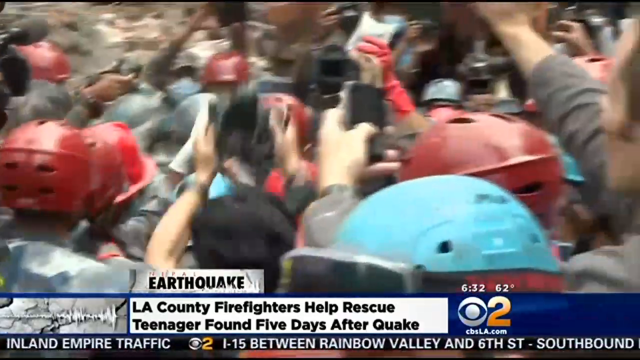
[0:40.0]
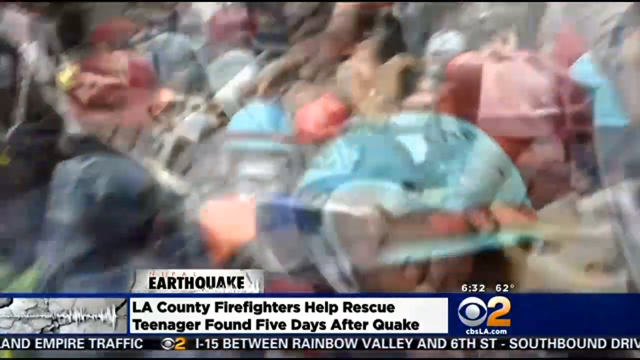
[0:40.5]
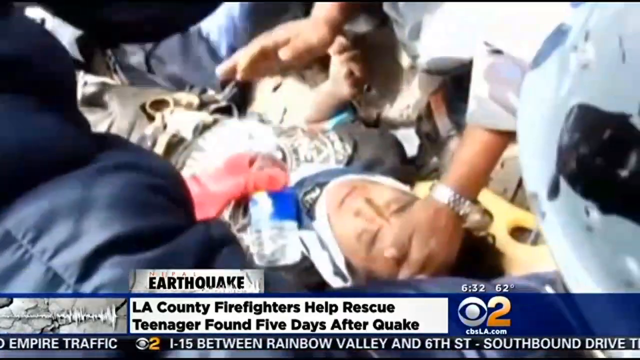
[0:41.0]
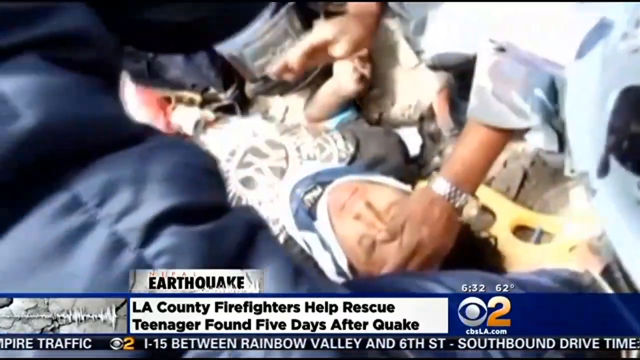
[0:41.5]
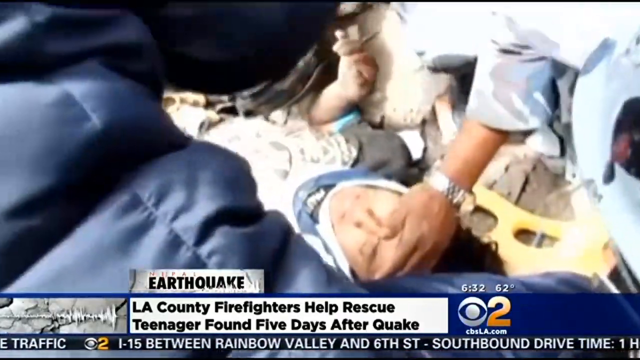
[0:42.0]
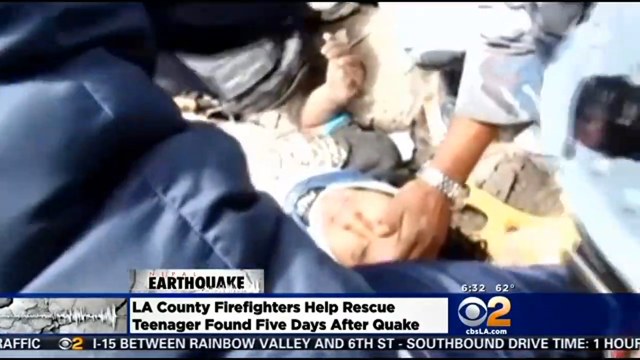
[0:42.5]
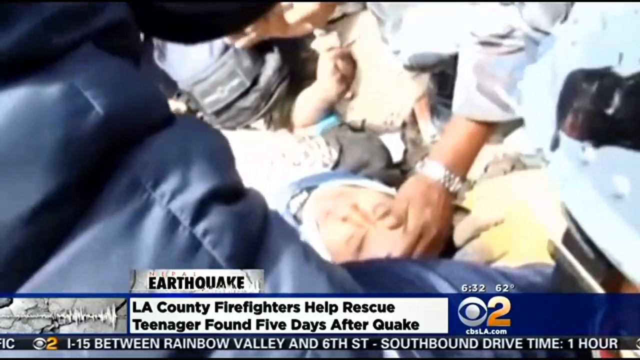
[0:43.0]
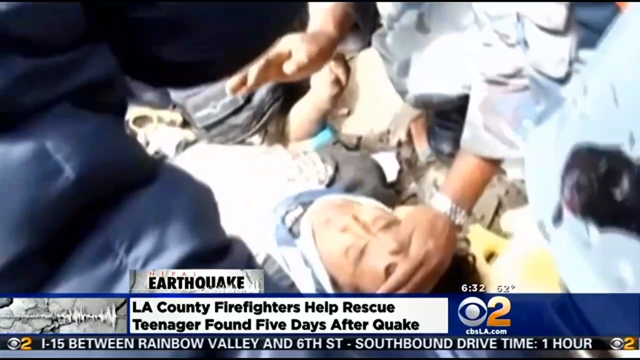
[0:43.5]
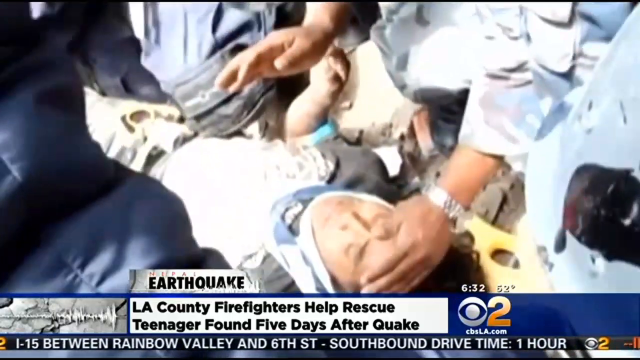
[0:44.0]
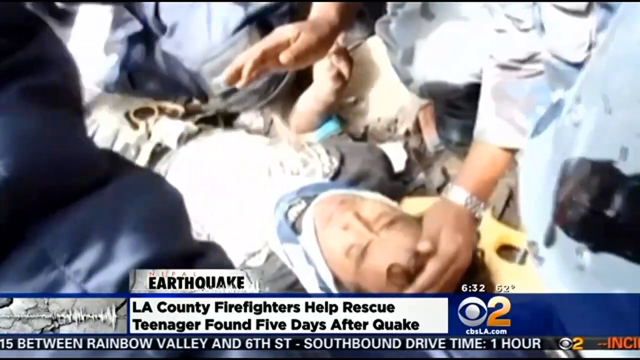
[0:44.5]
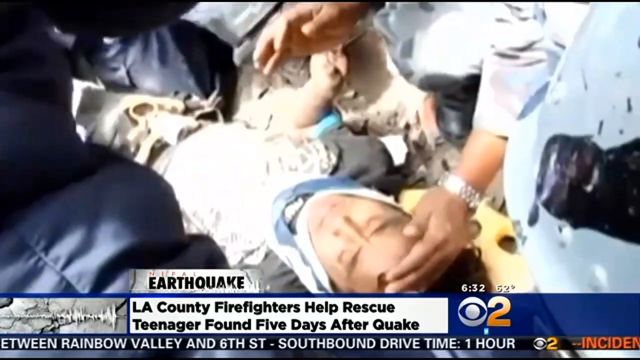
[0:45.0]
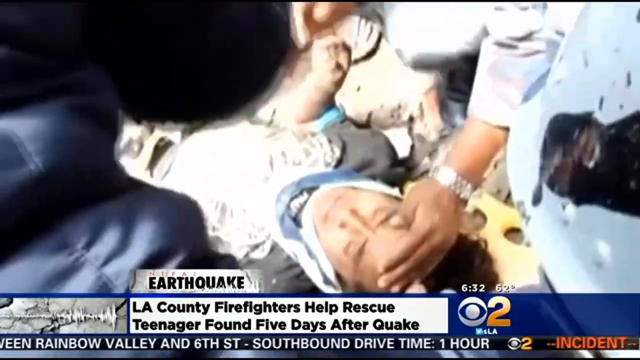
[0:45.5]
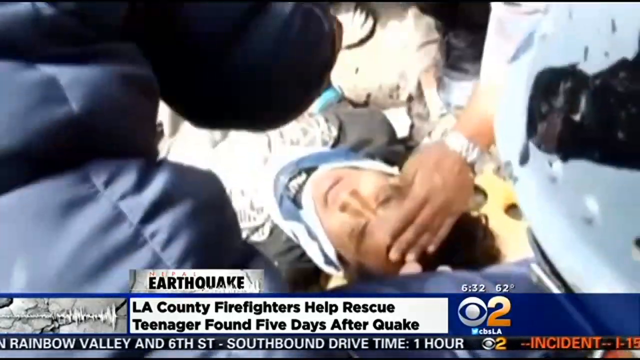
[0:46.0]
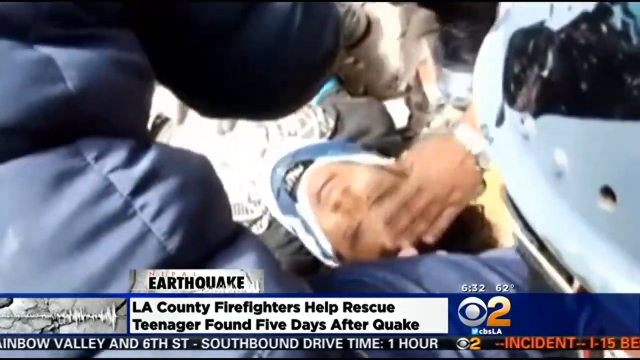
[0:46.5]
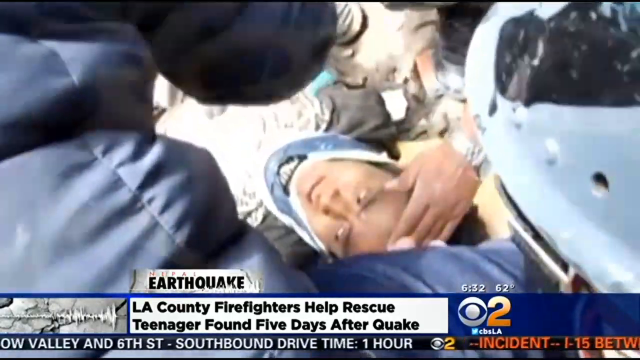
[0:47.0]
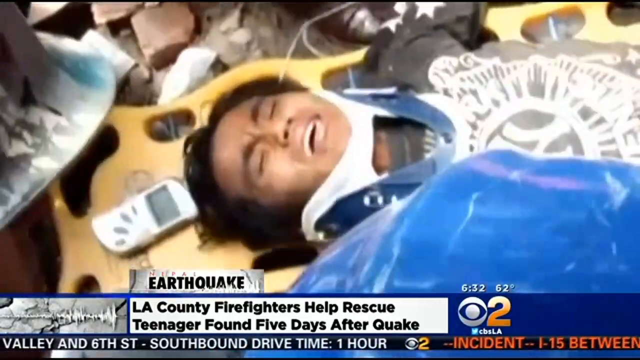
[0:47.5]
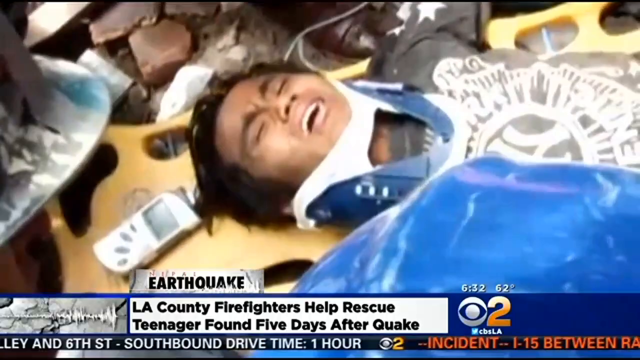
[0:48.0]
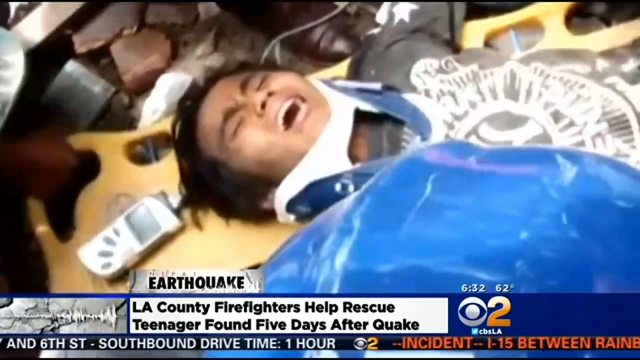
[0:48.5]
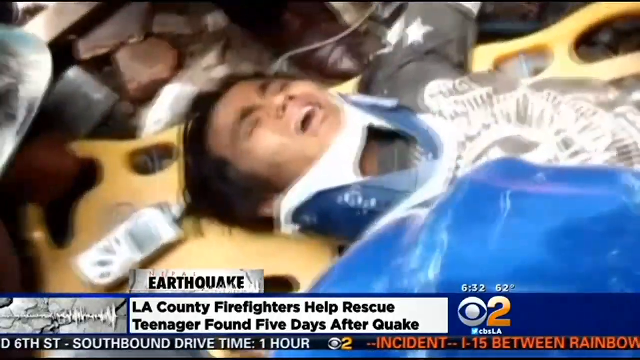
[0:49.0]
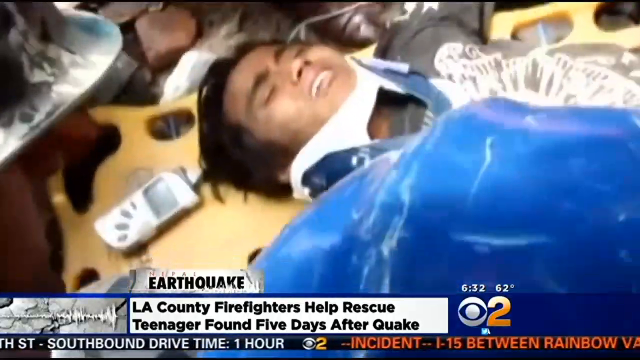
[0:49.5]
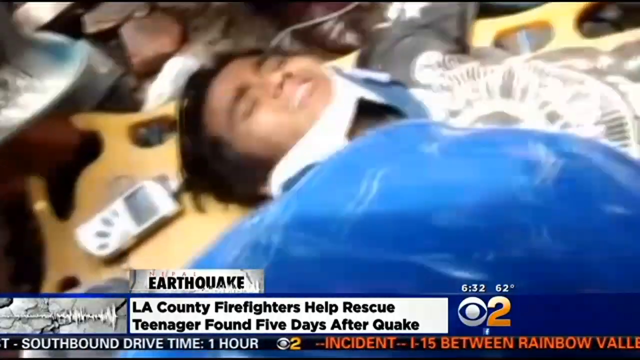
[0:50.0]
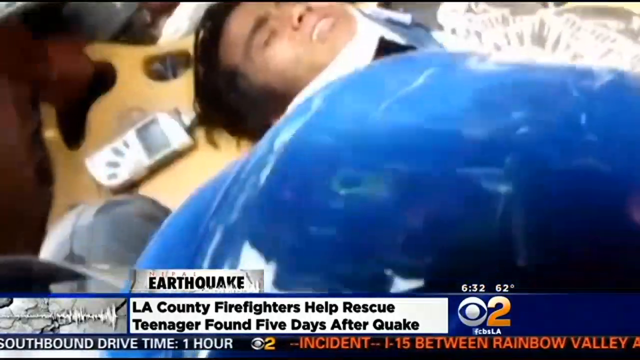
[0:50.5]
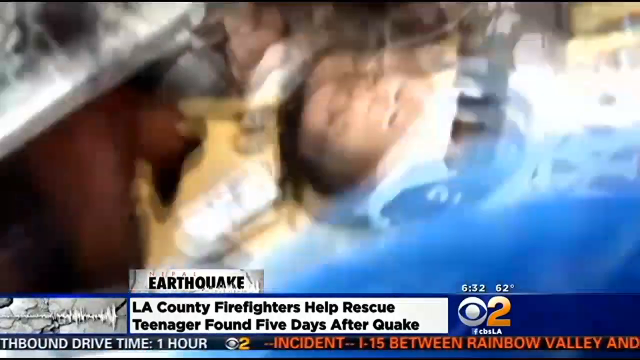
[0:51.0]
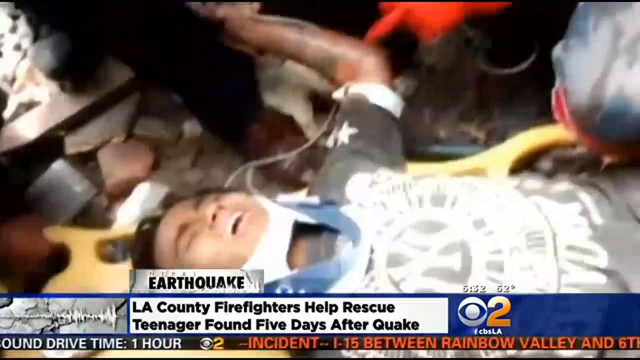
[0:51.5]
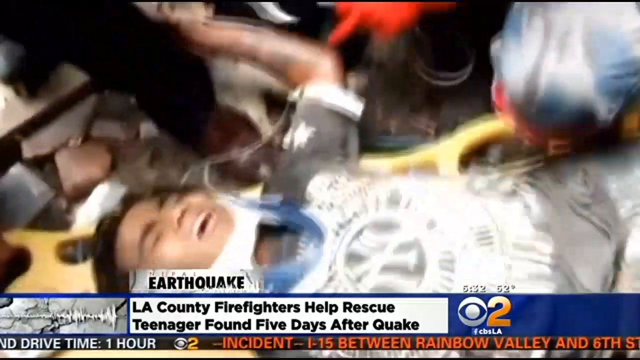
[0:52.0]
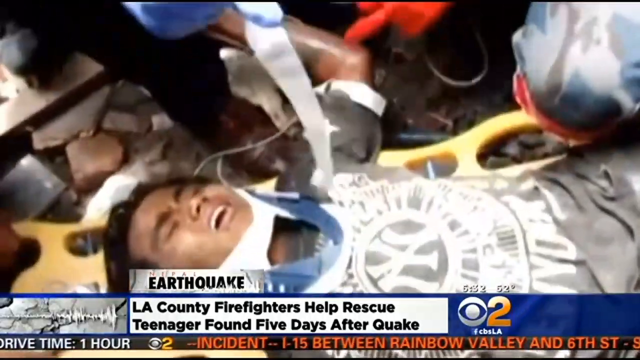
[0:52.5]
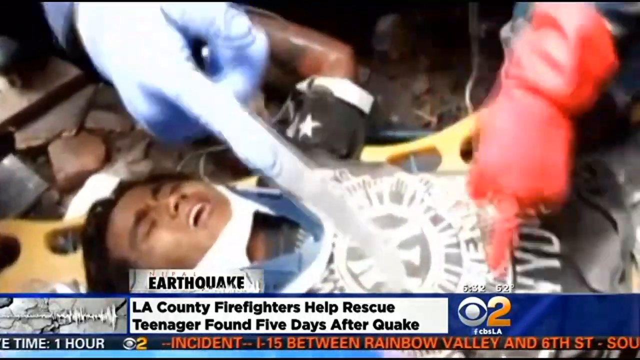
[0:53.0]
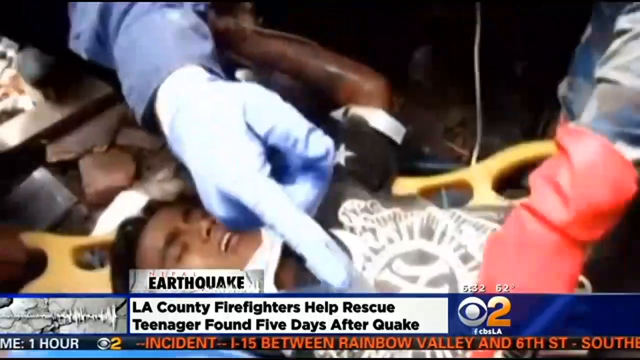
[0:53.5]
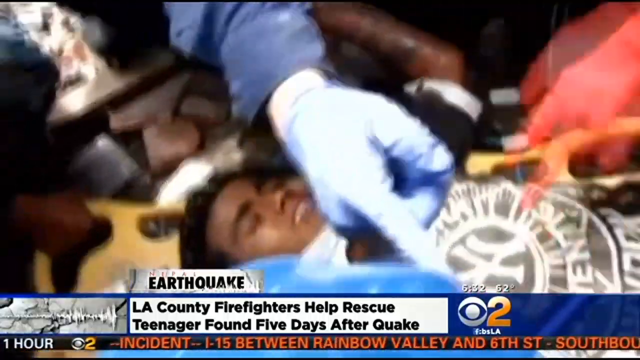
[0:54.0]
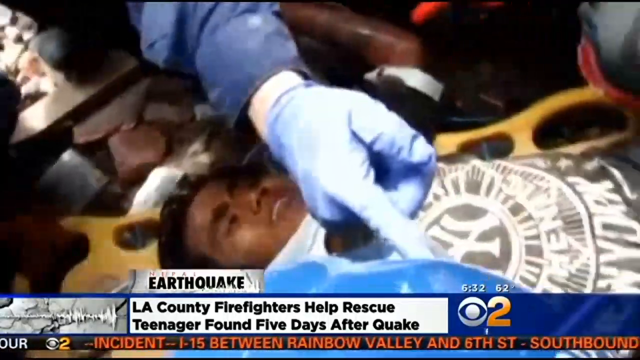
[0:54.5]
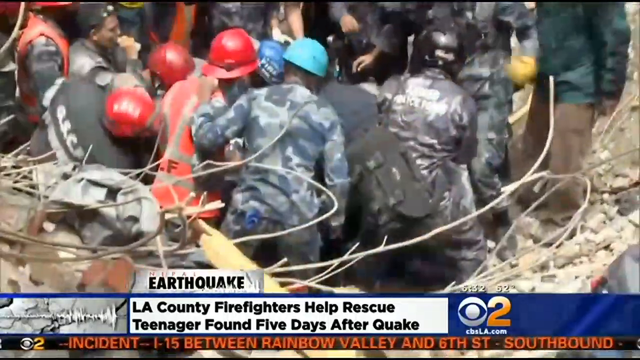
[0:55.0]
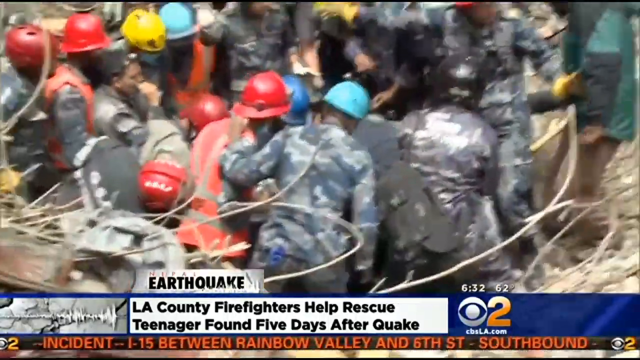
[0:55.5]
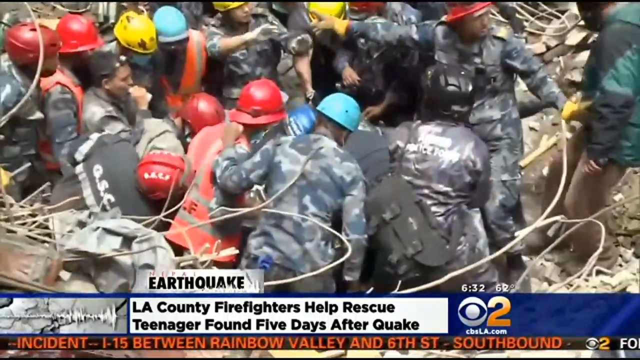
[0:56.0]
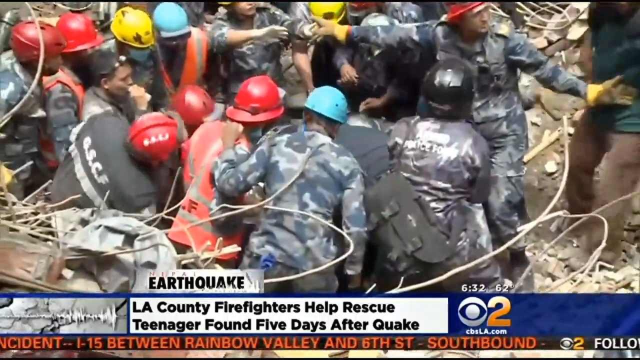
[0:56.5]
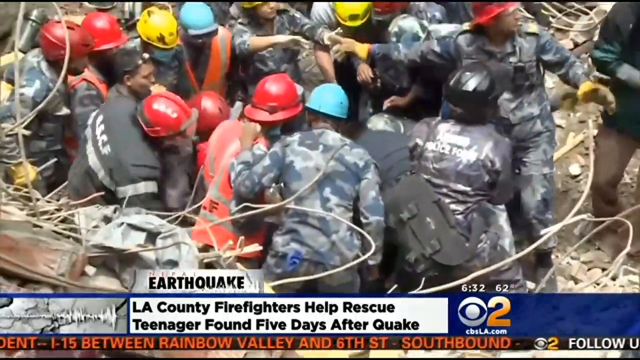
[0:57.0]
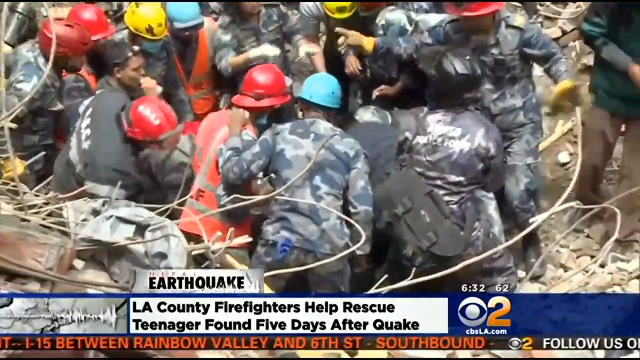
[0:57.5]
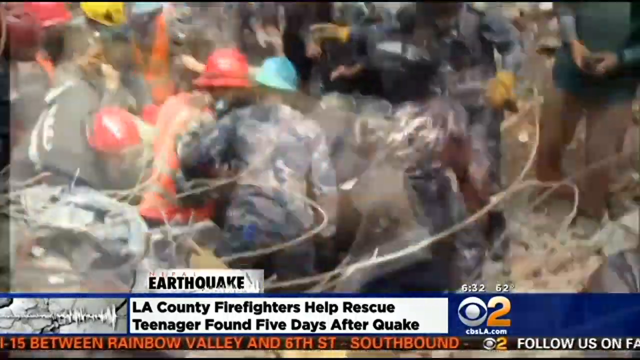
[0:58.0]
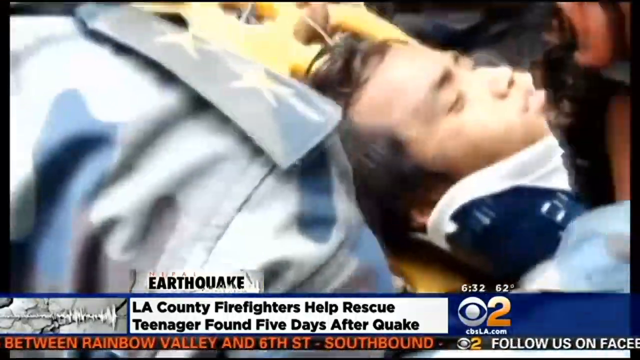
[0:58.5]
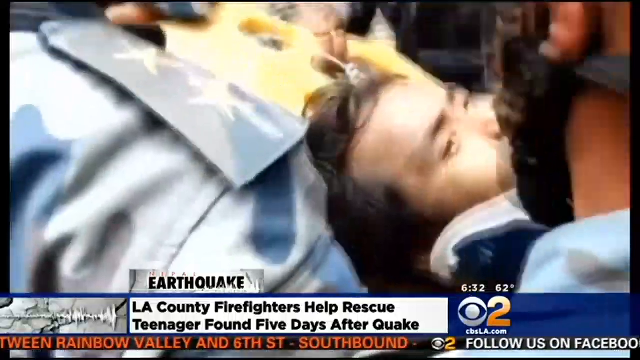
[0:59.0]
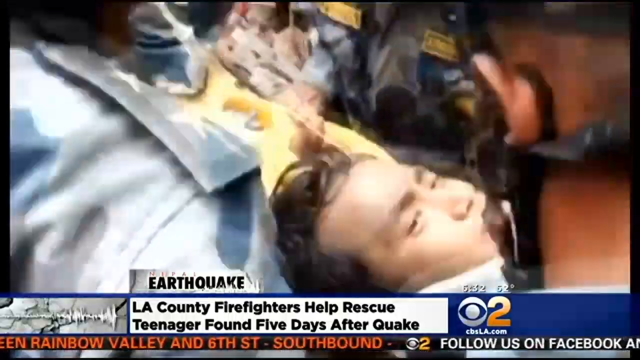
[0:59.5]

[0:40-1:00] A crowd of people faces away from the camera. Many of them wear red or blue helmets and some do not; those without helmets hold up cameras, taking pictures of something away from the camera. Next, a young Nepali teenager is strapped to a yellow stretcher. He wears a black t-shirt and a blue and white medical collar. A hand strokes his hair in a comforting manner, and rescue workers in blue and red helmets are around him. A different view shows the teenager's face, contorted in pain as he cries. None of the surrounding rescuers' faces are visible, but a hand in a blue medical glove uses medical tape to tape something onto the boy. The boy is on the yellow stretcher, crying.